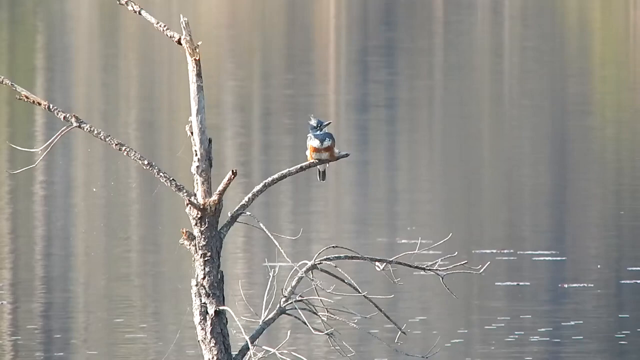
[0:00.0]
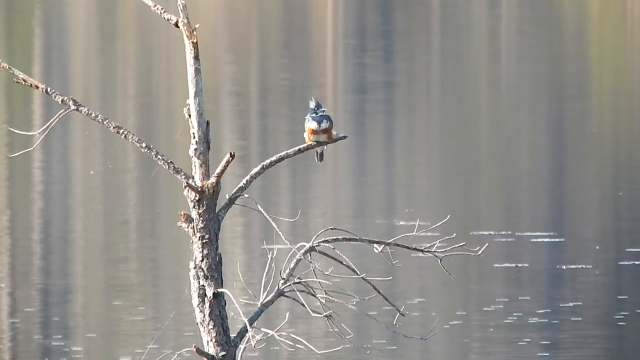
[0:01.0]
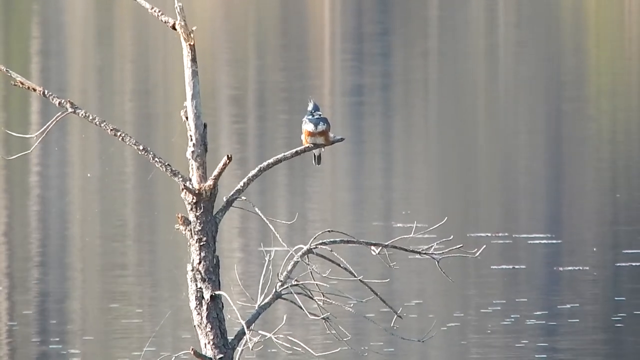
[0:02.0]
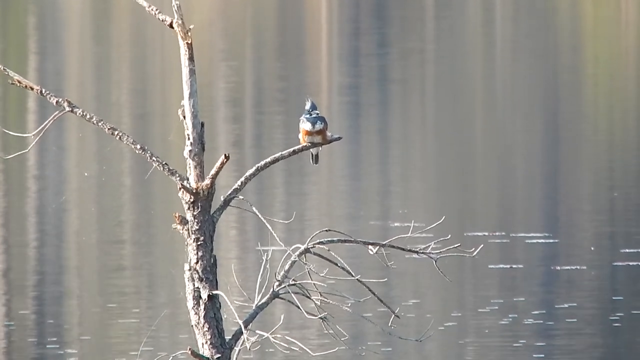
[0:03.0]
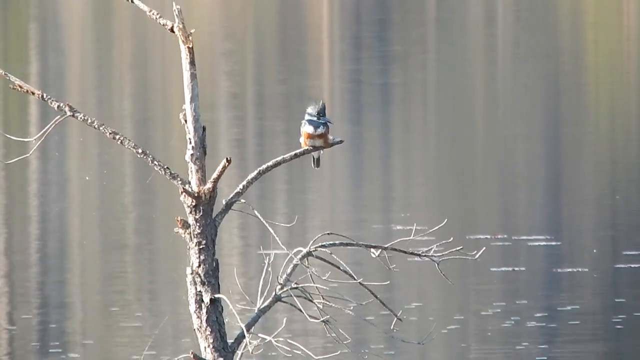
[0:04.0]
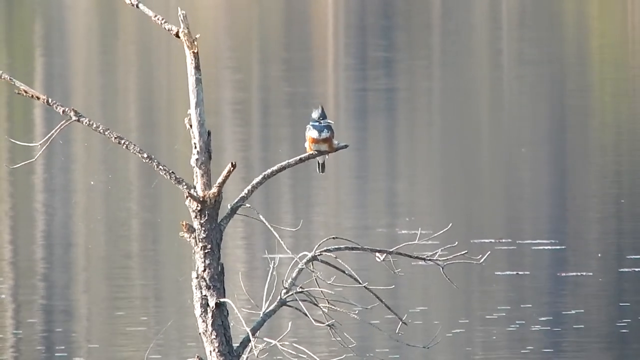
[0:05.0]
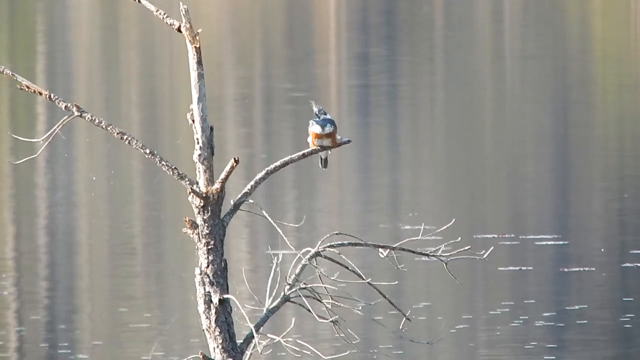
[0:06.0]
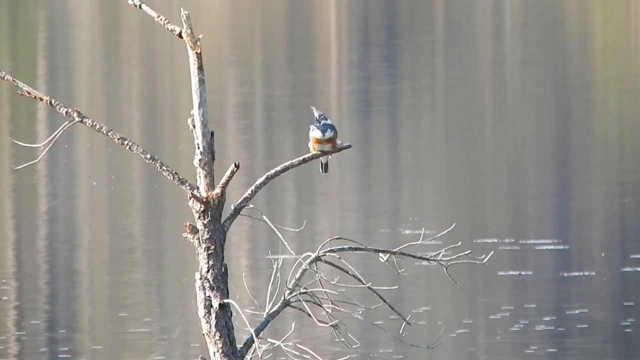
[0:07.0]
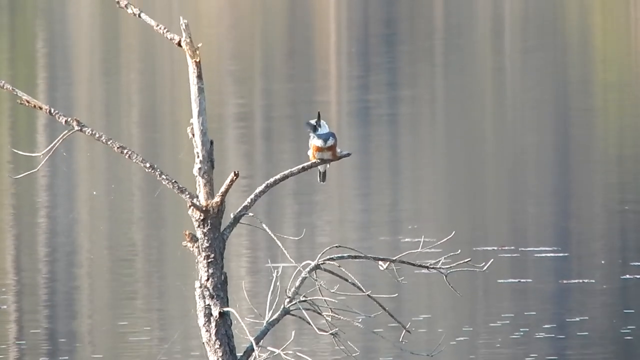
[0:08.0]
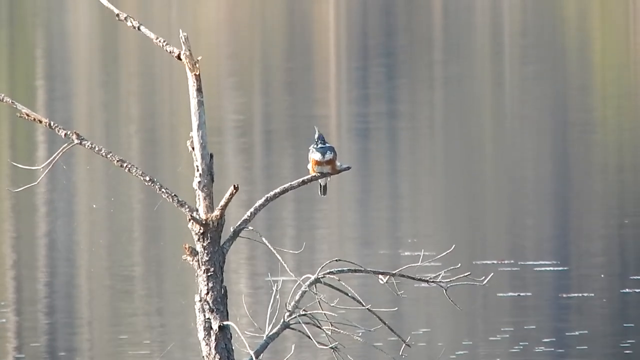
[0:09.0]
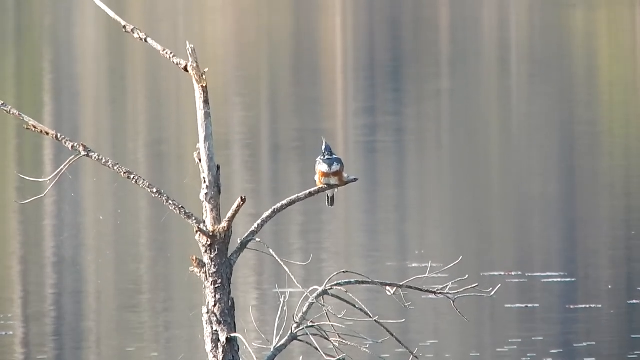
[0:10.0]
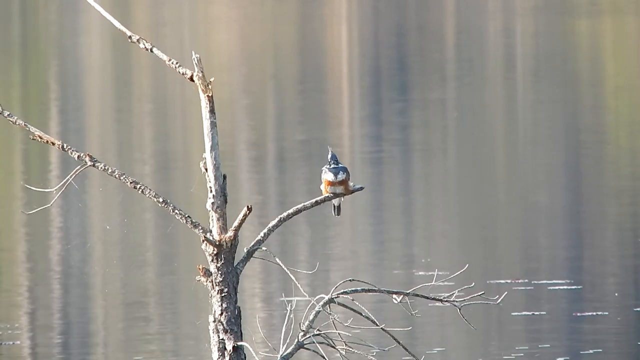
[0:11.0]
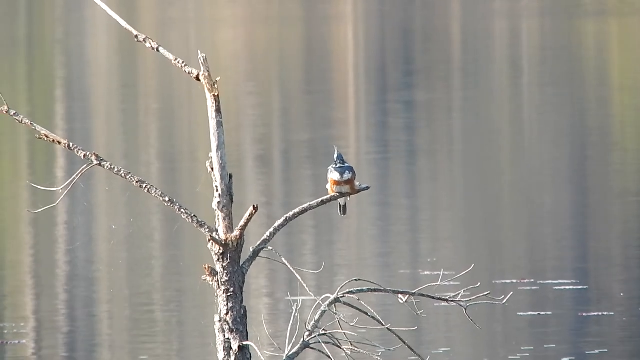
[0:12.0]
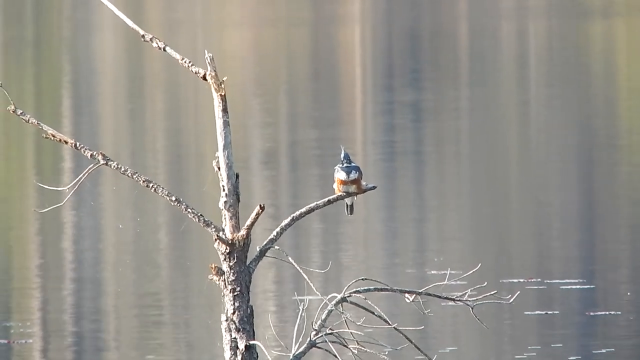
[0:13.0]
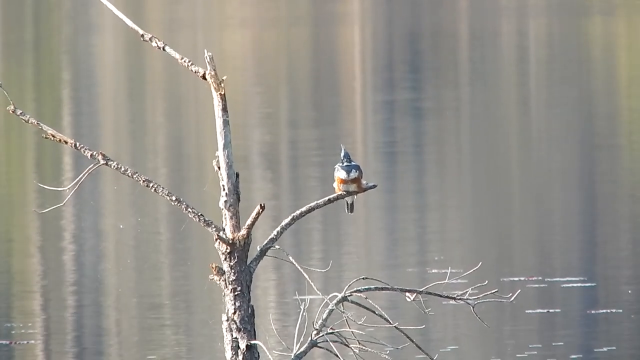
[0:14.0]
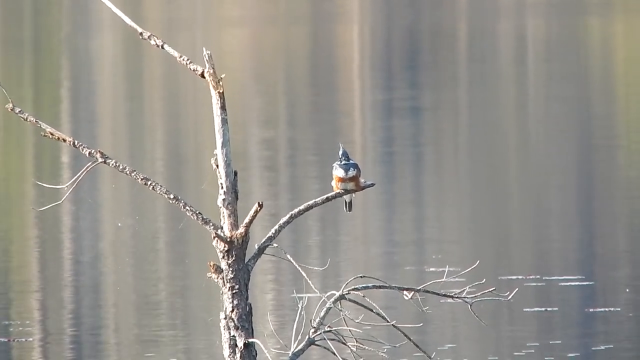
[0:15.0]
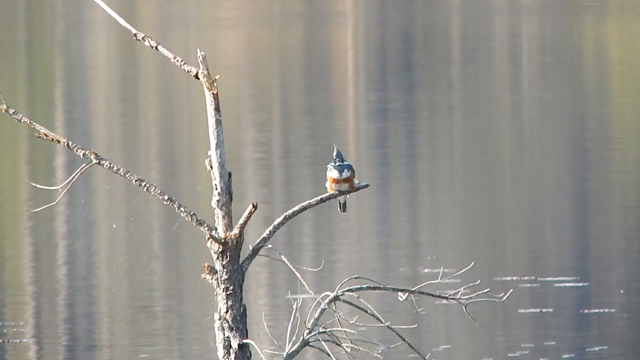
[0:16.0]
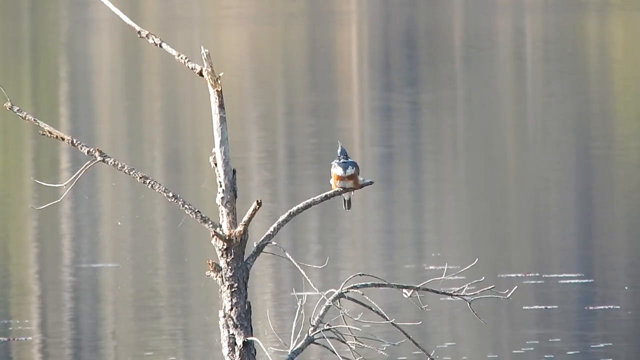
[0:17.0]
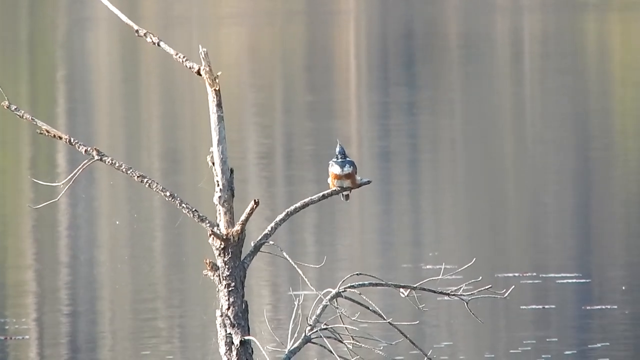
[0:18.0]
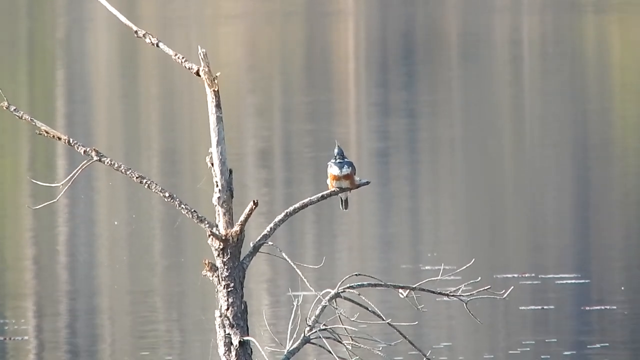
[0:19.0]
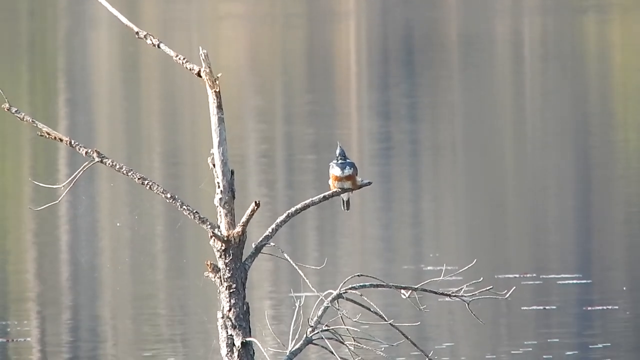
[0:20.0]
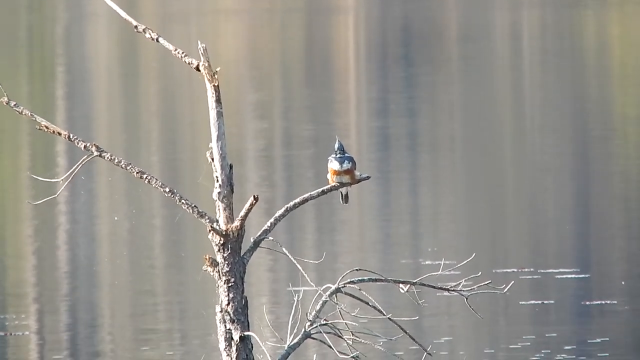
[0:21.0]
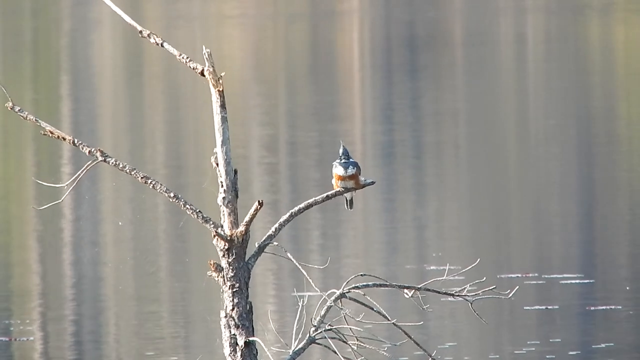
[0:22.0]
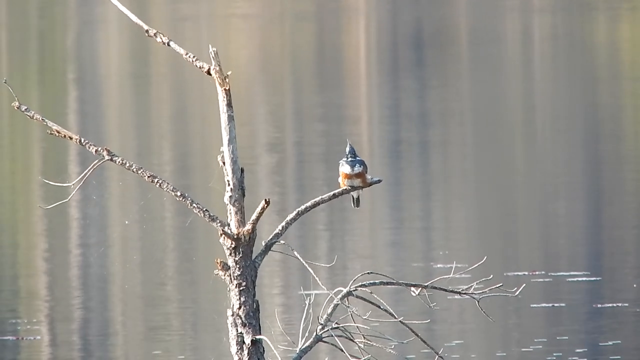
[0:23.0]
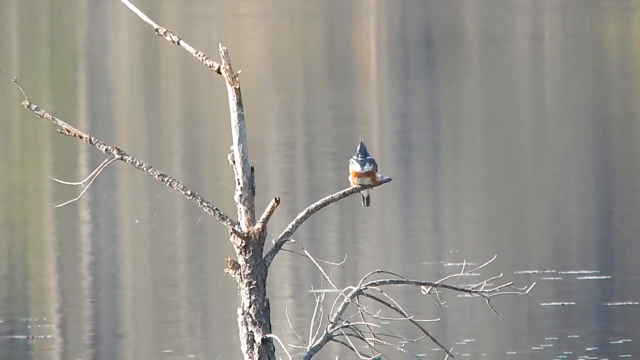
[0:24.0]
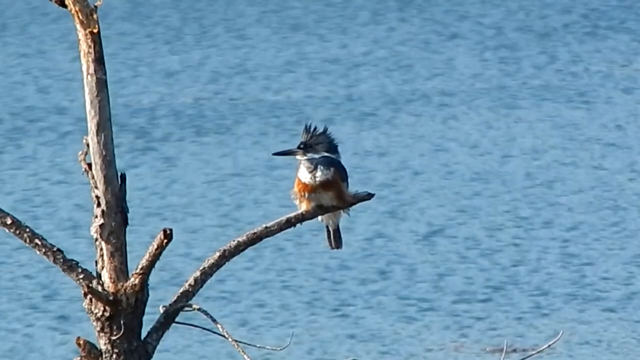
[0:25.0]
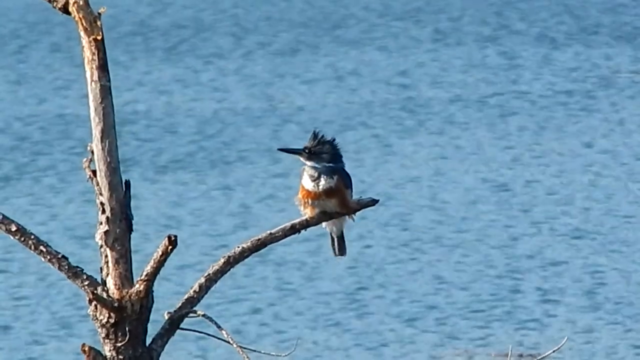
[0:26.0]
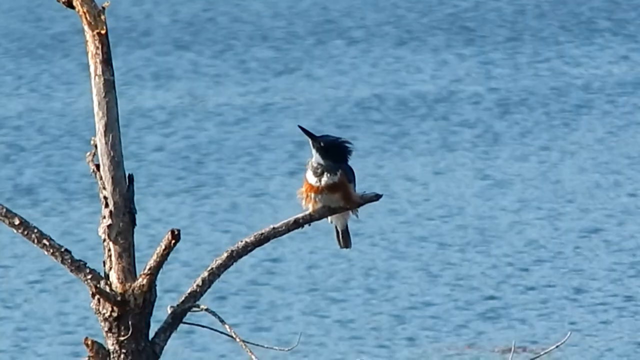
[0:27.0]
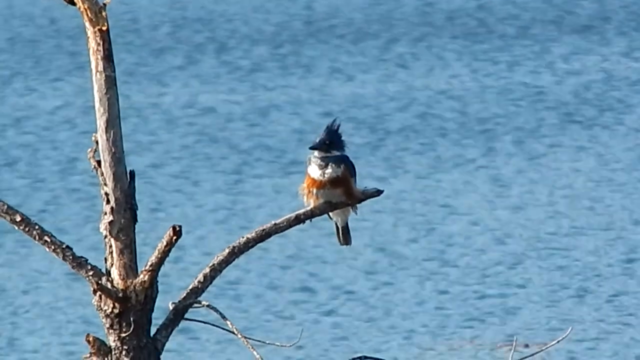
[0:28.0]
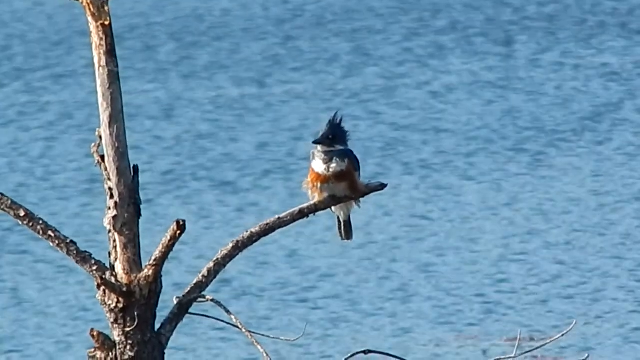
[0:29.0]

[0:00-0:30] A dead old tree, still standing, is in front of a lake. The lake is very still, and twigs float on its surface. Three branches protrude from the top of the tree, and on the rightmost branch at the top a bird is perching. The bird is hard to see because it is not close enough to be in focus, but it has a red breast. The image stays still on the bird, which cocks its head to one side and looks up at the sky while still sitting on the perch. A close-up of the bird then shows that it is a woodpecker: the feathers on the top of its head stand up, its beak is long and pointy, and it has a red breast.